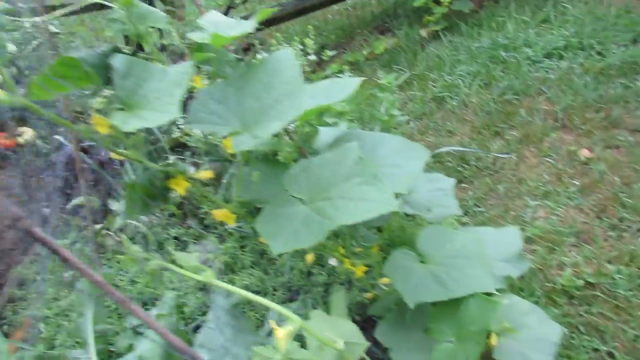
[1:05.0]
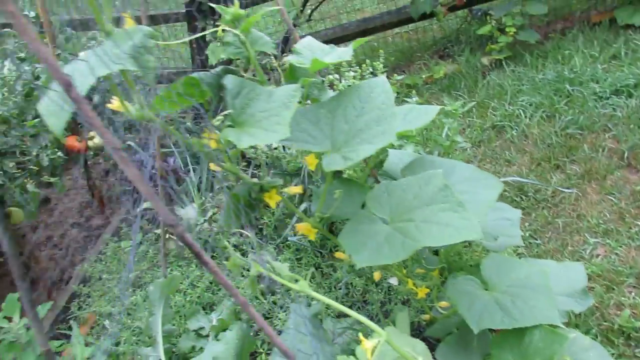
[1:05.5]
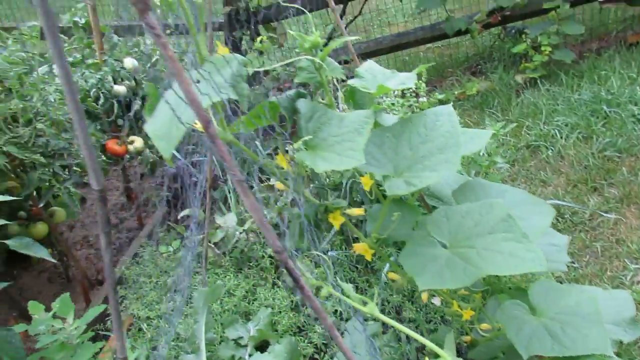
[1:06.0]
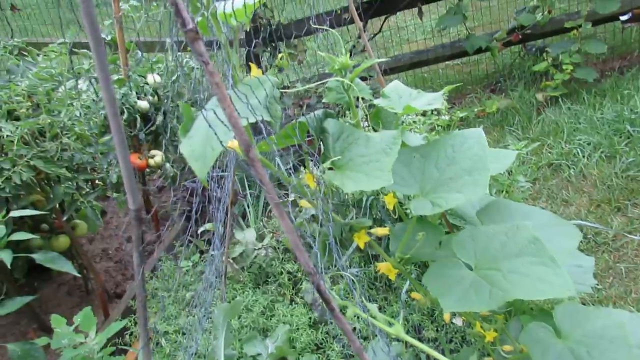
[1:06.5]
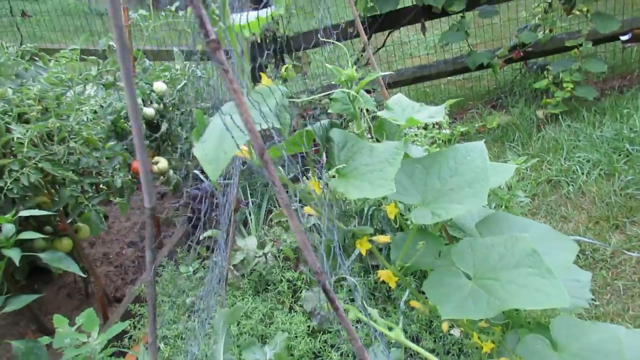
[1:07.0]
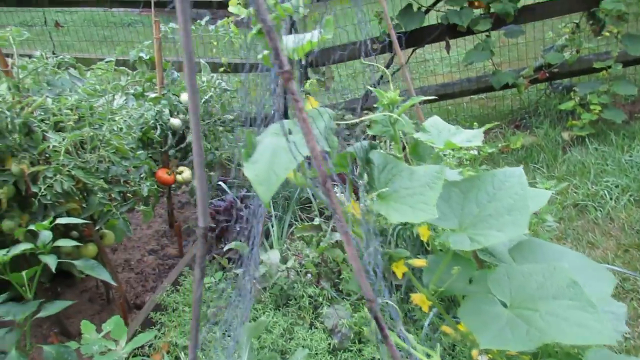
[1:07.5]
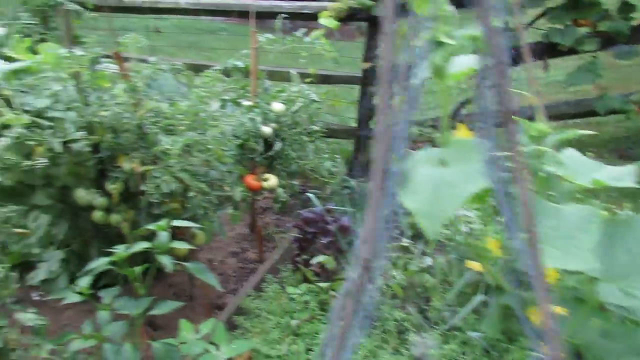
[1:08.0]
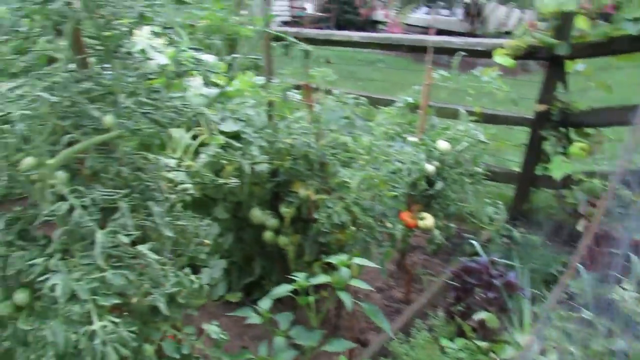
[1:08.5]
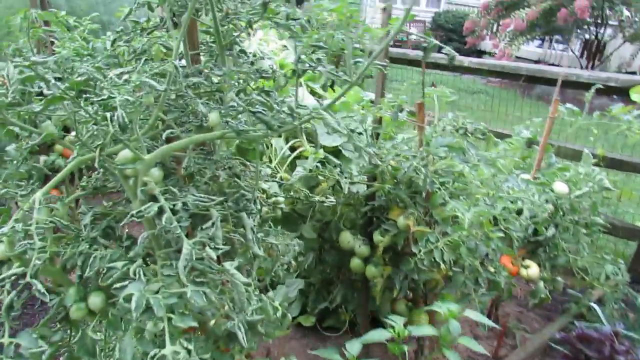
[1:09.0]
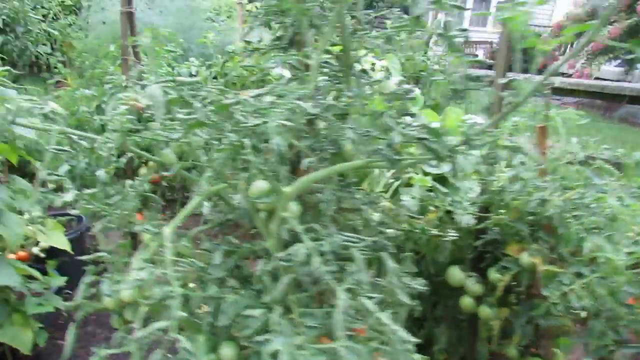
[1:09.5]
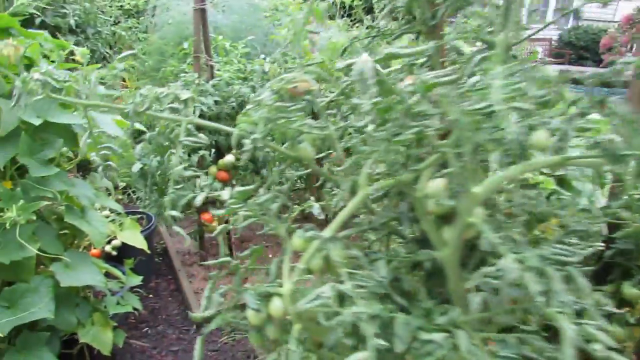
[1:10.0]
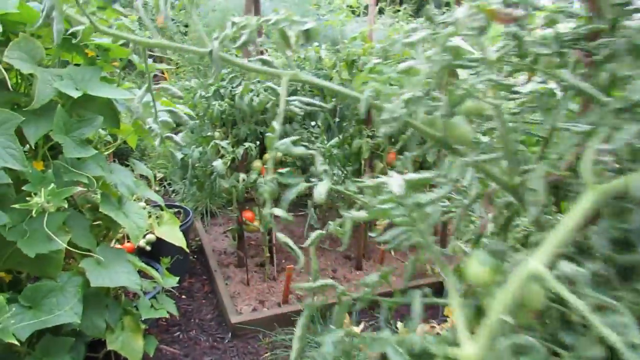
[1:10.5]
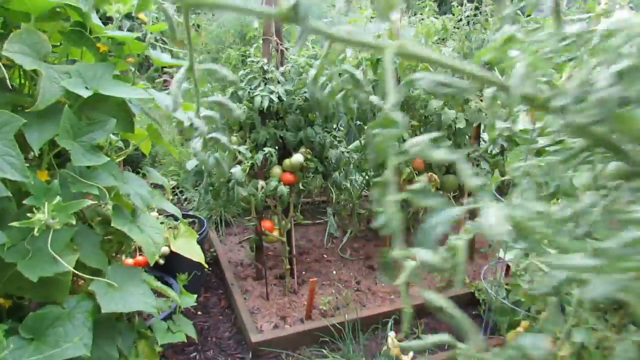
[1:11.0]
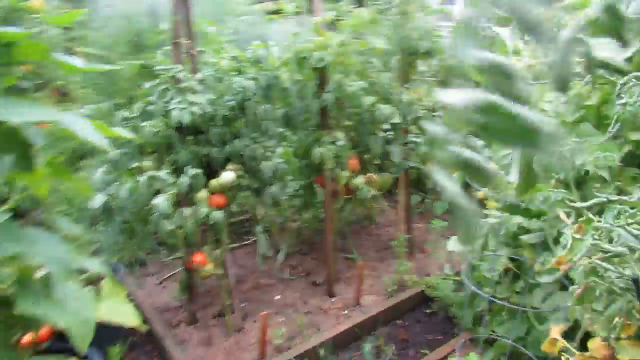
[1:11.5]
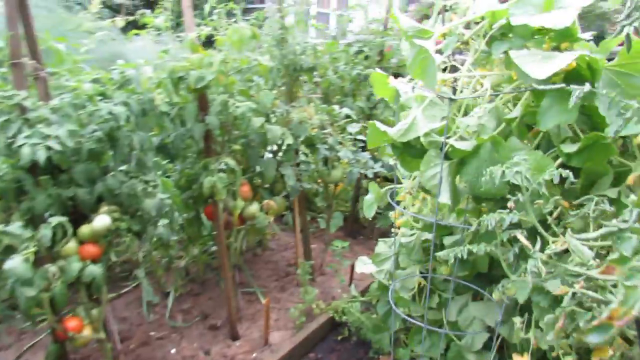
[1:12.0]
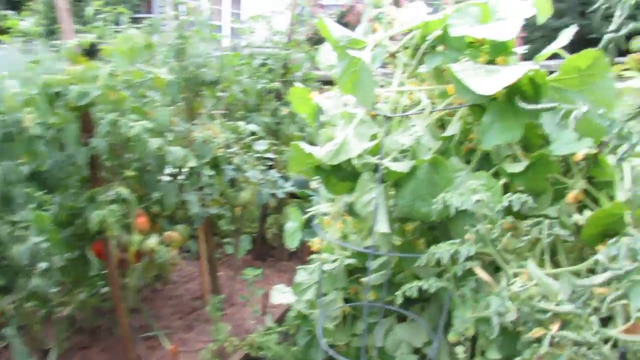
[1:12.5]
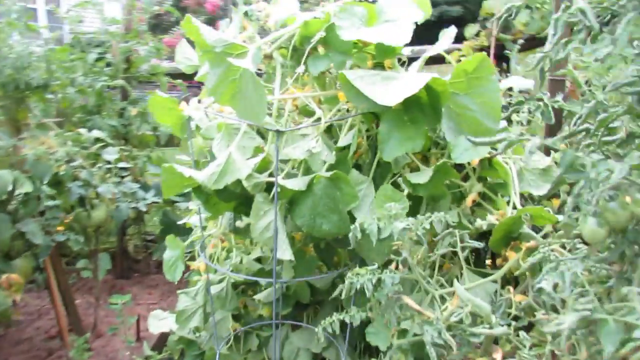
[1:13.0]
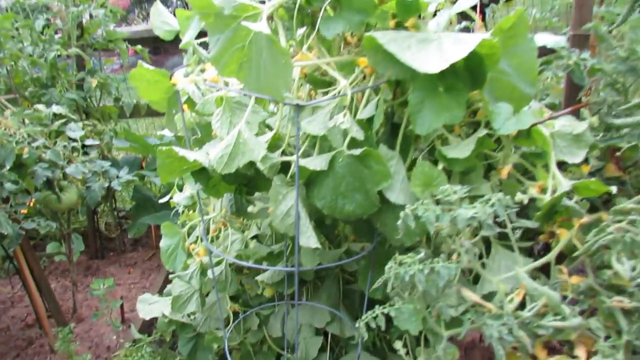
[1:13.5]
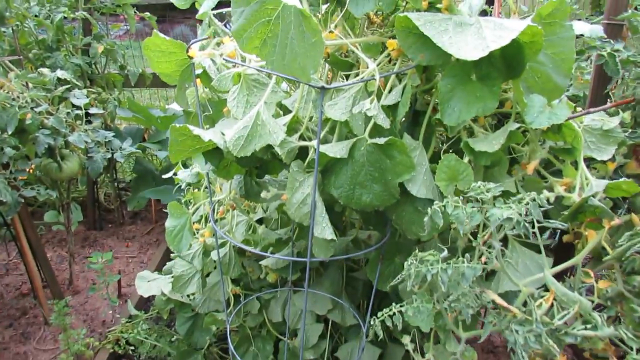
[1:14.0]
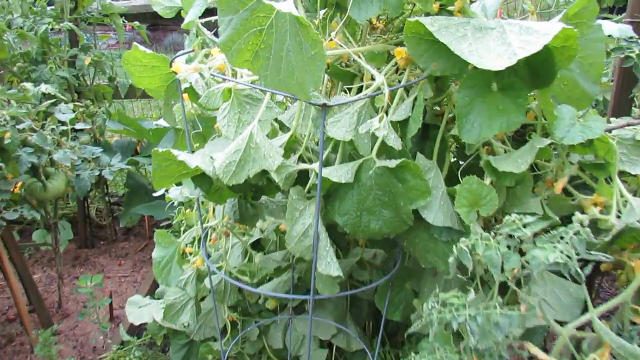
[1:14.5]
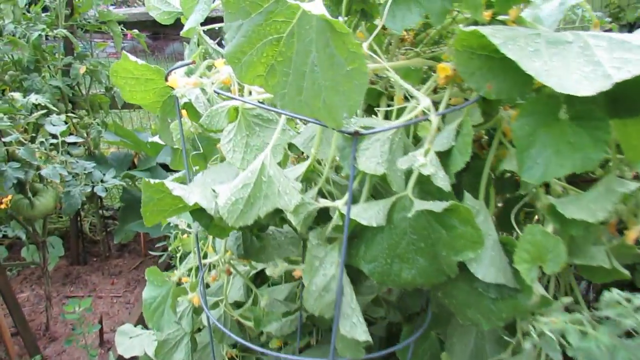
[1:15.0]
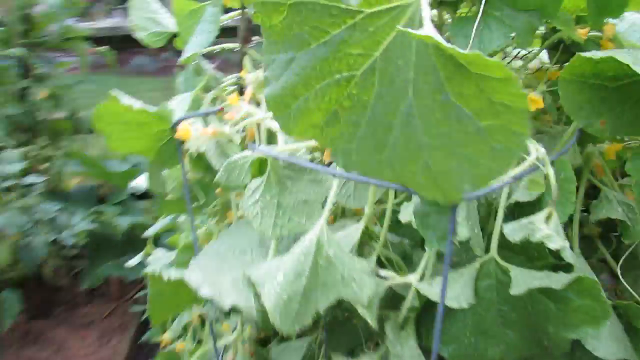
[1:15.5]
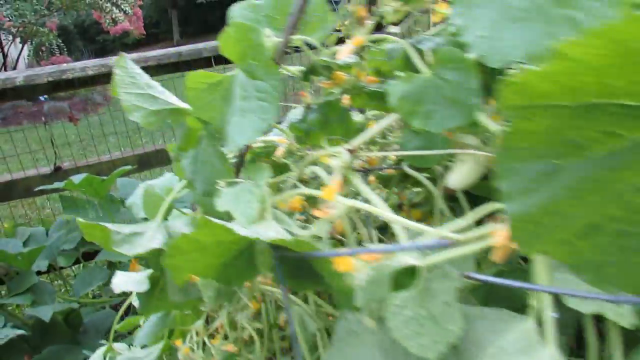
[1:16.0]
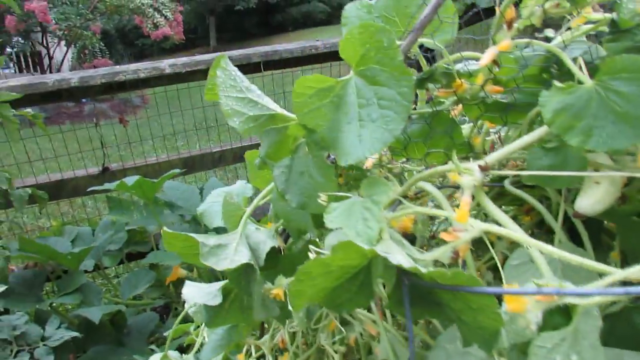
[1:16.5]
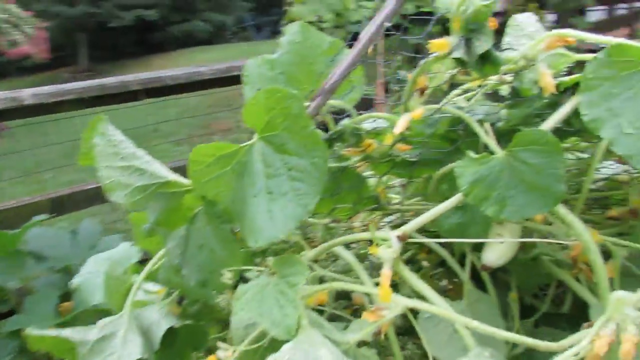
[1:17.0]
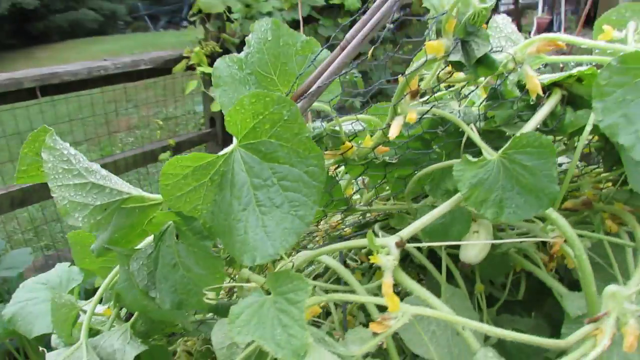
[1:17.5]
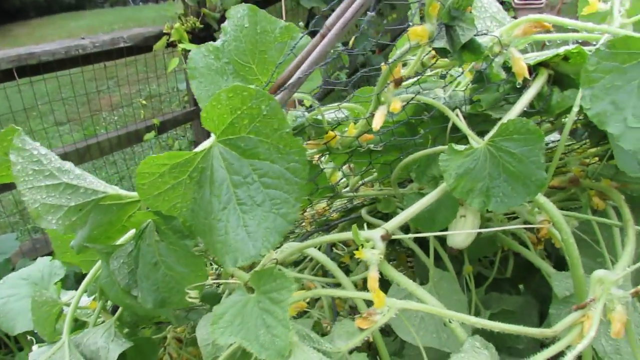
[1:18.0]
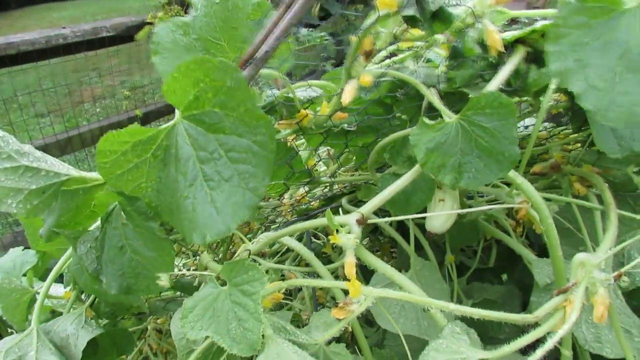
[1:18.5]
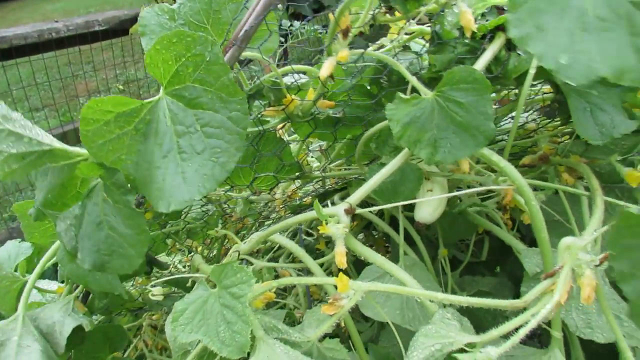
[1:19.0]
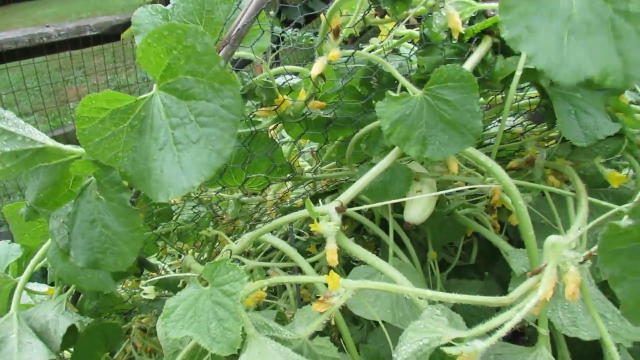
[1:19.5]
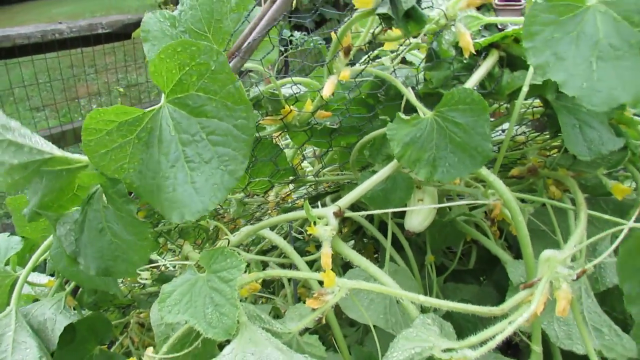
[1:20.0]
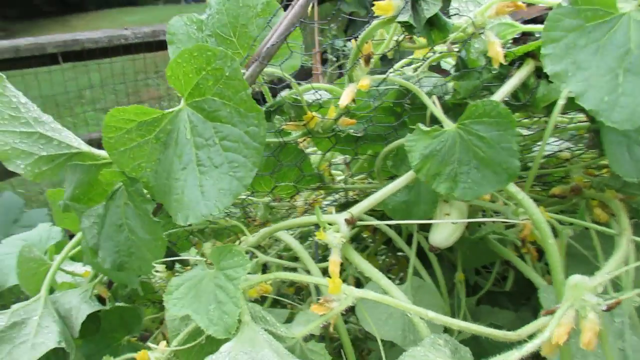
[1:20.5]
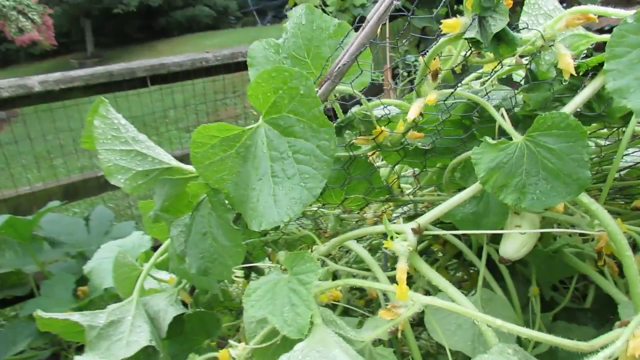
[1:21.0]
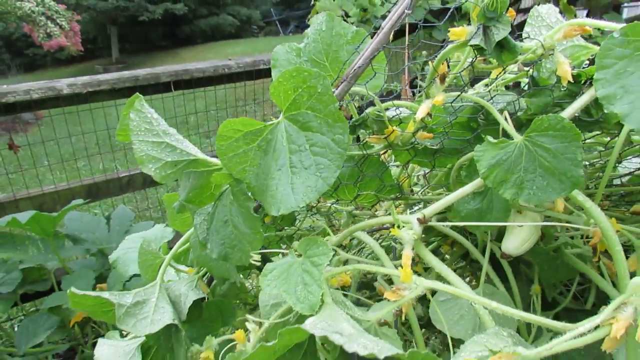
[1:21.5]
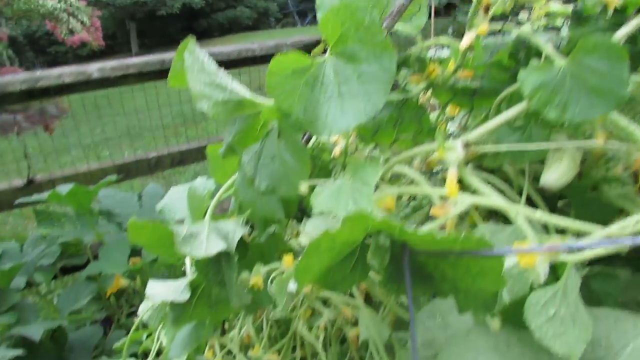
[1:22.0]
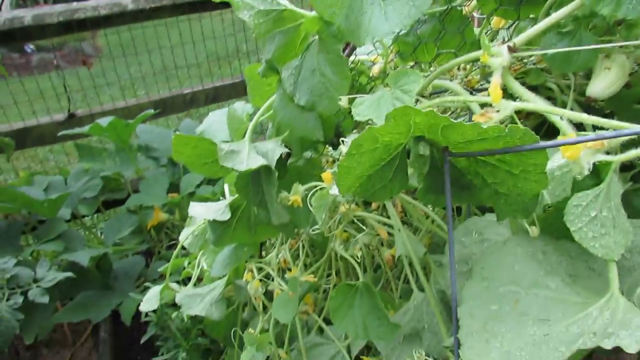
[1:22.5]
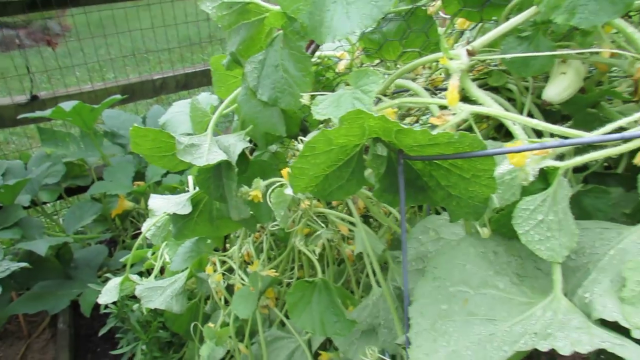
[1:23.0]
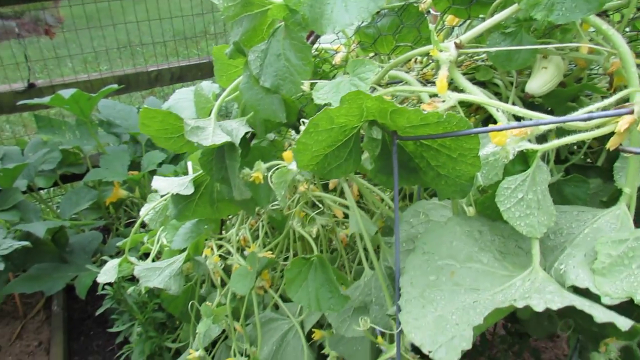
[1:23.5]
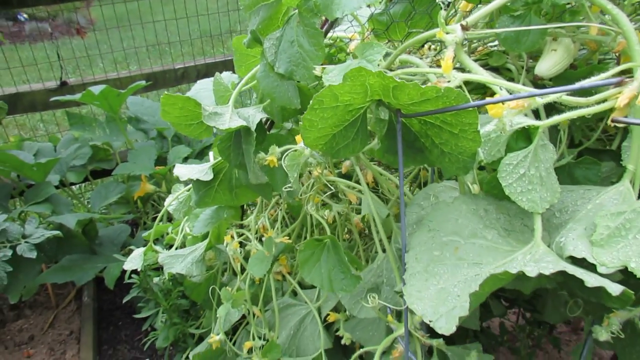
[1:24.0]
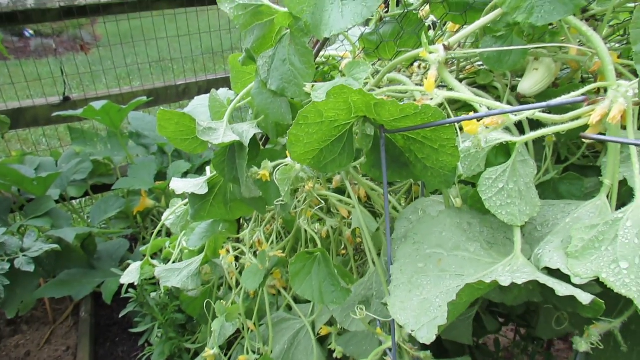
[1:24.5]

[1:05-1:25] The same plant grows along some kind of chicken wire trellis, its leaves and small yellow flowers growing upwards for vertical growth. The camera pans to the left and turns, showing tomato plants, then turns again to the right, moving left, then straight, then right. It reaches another plant with the same green leaves and small yellow flowers, this one with many more yellow flowers all over it than the first, also growing upwards on some kind of chicken wire, a metal apparatus that creates upward growth. Water droplets cover the plant, and a couple of droplets fall off the leaves while the camera is on them, especially from the top right leaf; it is unclear whether the water comes from a sprinkler, hand-watering or rain. In the background, the structure is now clearly a wooden fence with wire in between.